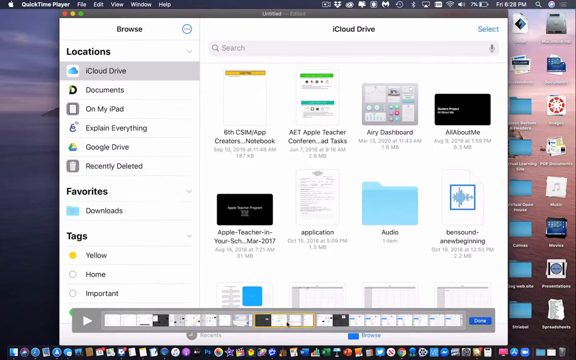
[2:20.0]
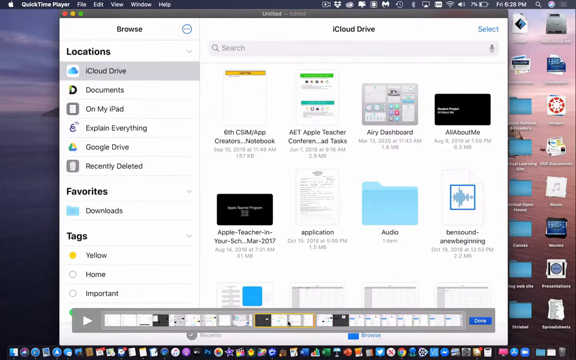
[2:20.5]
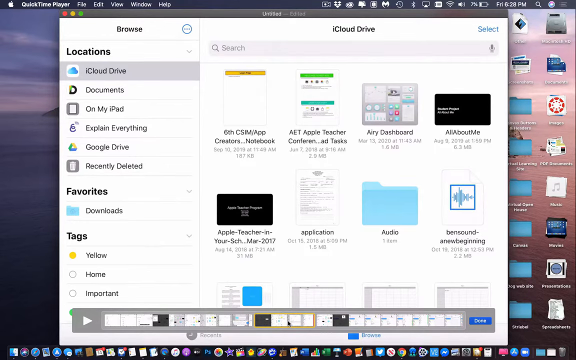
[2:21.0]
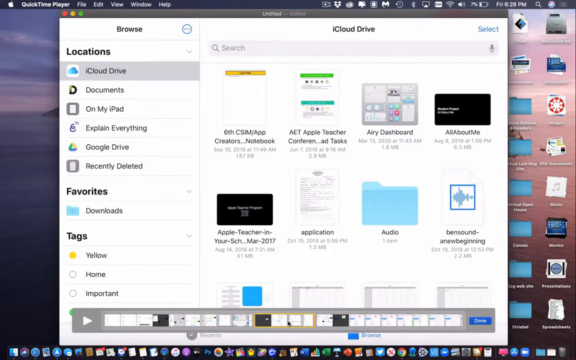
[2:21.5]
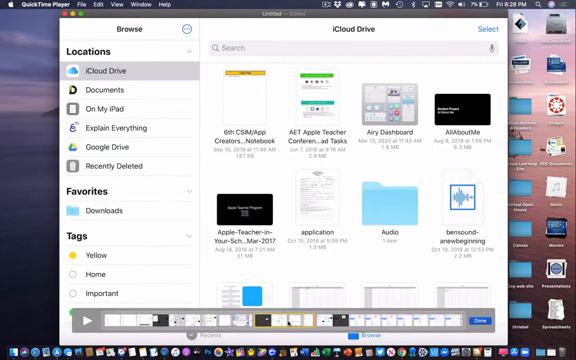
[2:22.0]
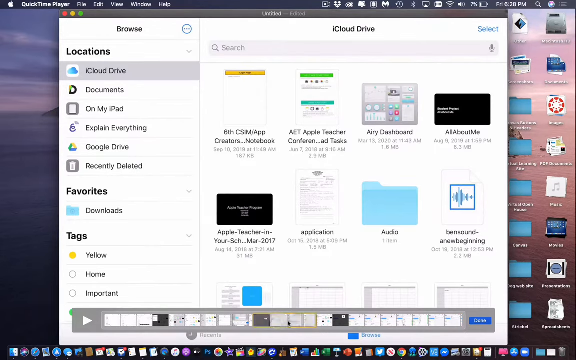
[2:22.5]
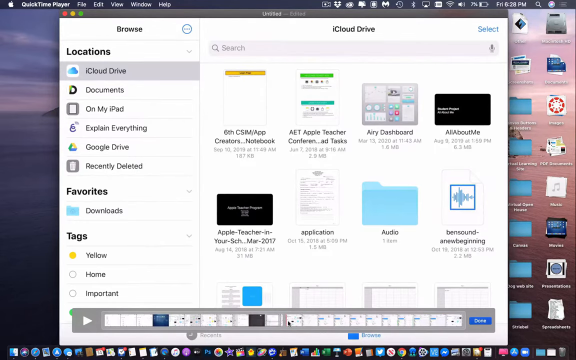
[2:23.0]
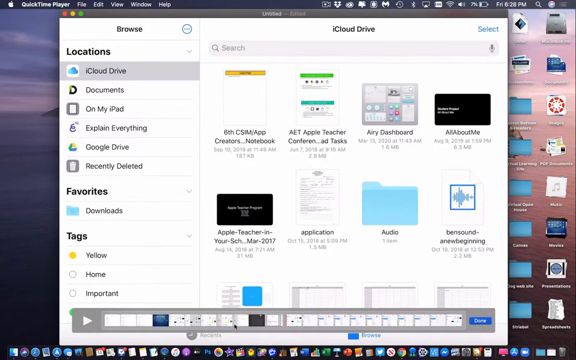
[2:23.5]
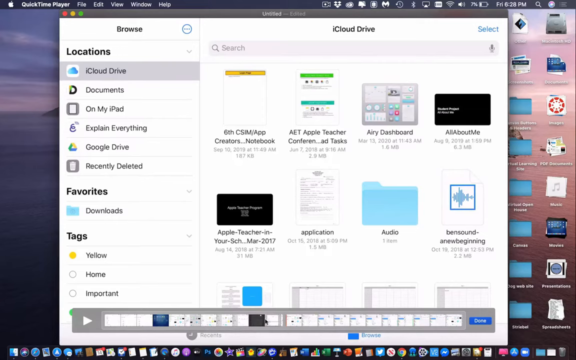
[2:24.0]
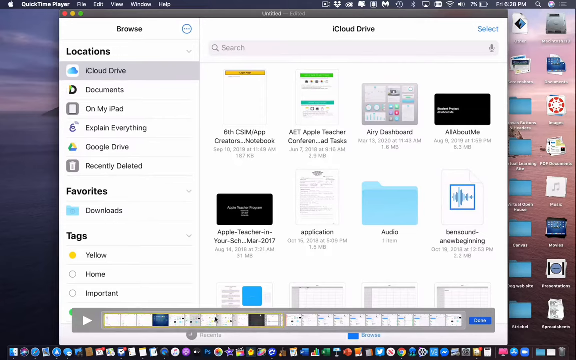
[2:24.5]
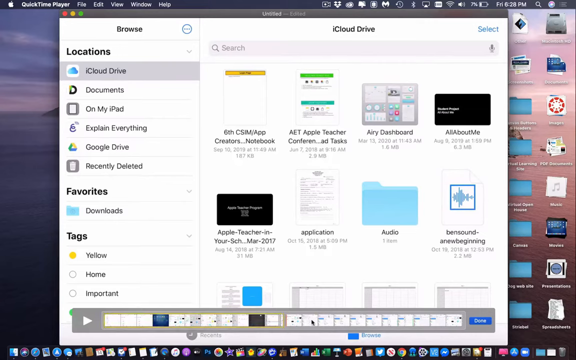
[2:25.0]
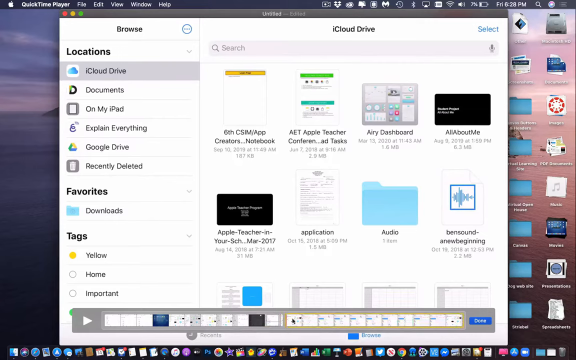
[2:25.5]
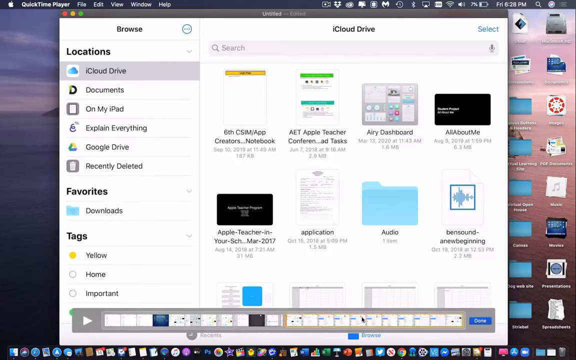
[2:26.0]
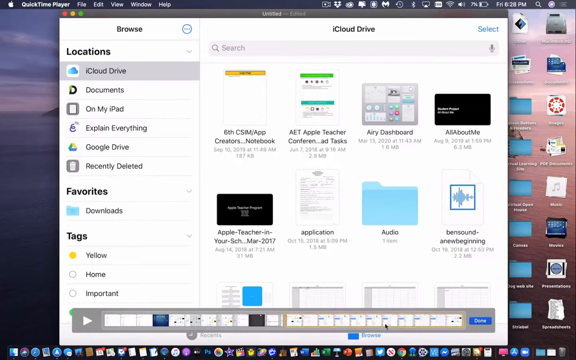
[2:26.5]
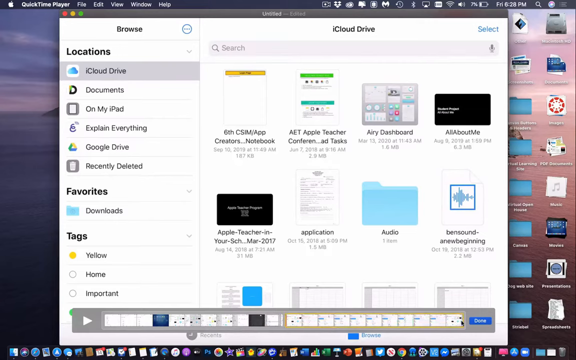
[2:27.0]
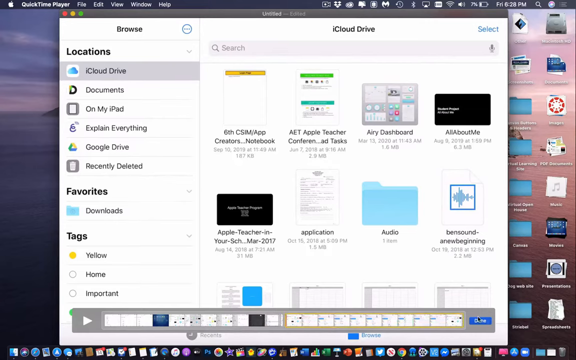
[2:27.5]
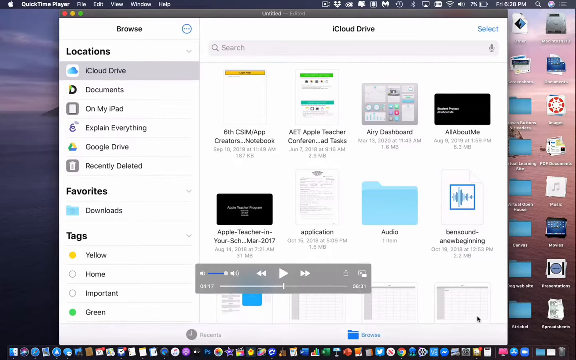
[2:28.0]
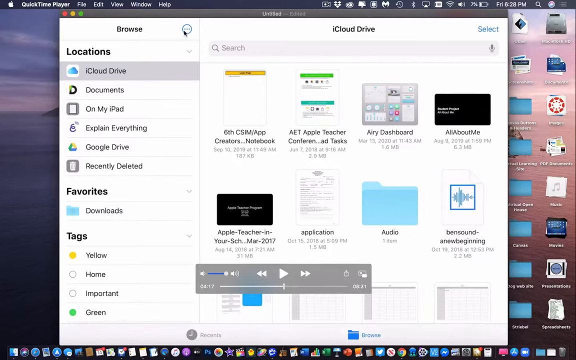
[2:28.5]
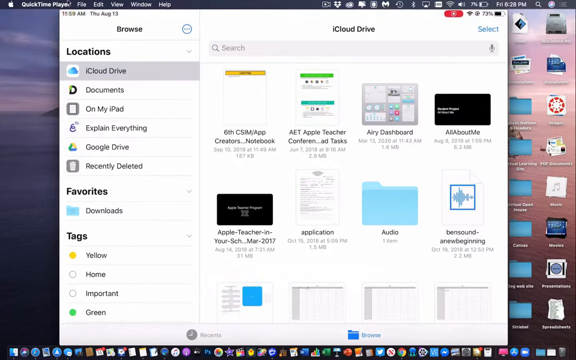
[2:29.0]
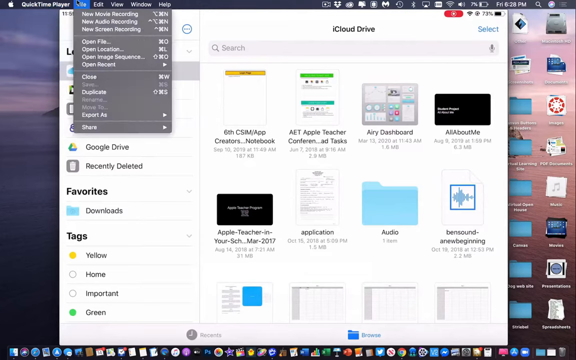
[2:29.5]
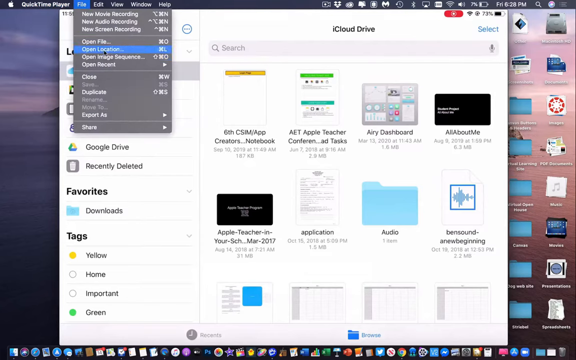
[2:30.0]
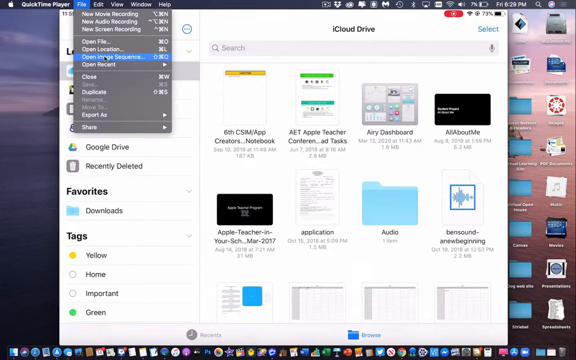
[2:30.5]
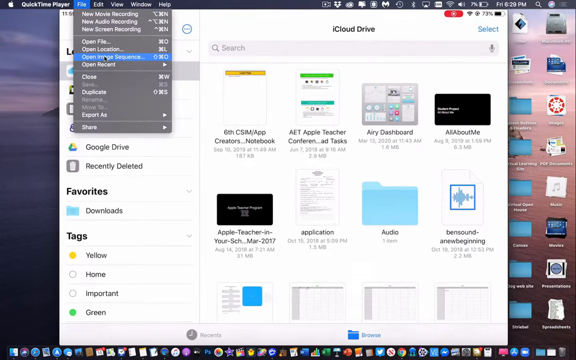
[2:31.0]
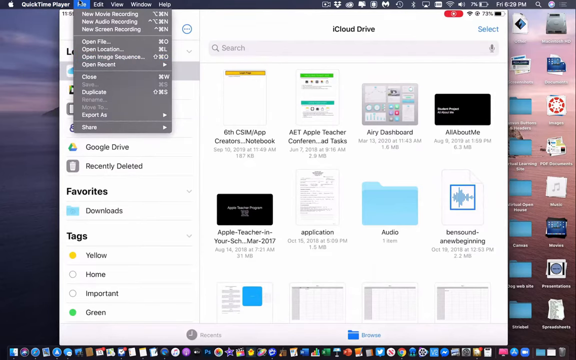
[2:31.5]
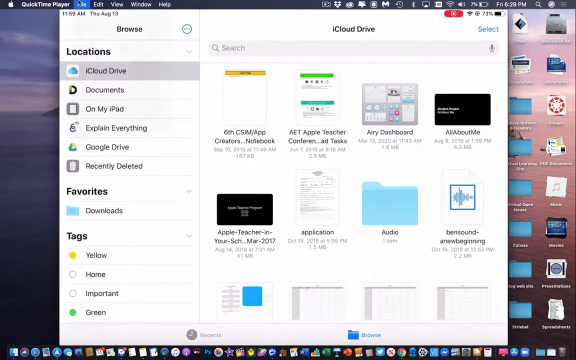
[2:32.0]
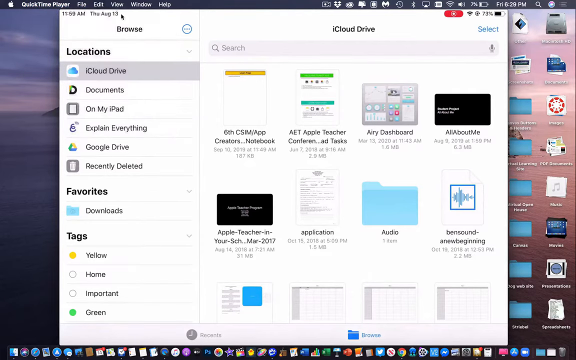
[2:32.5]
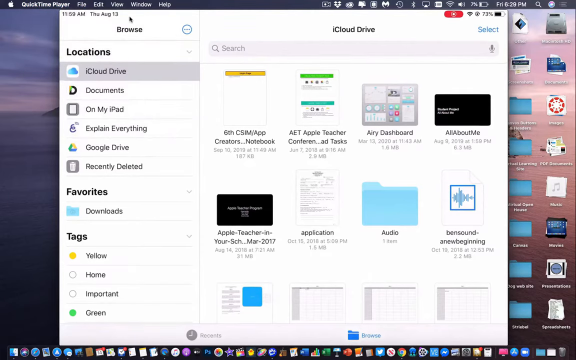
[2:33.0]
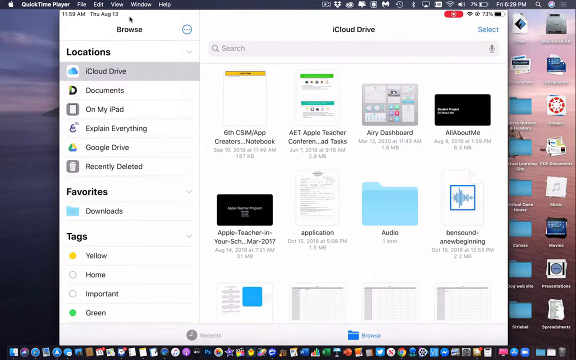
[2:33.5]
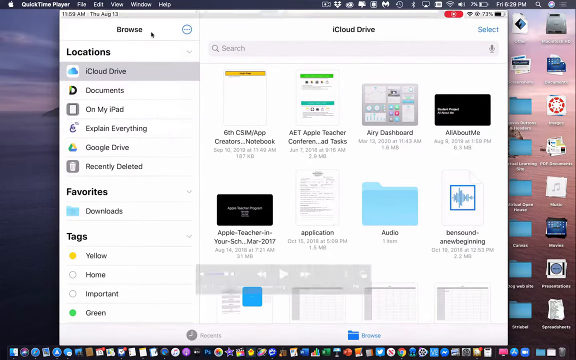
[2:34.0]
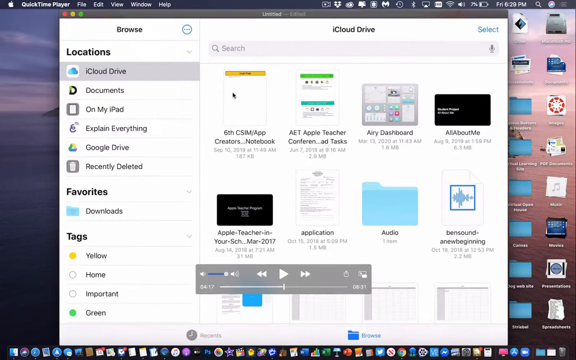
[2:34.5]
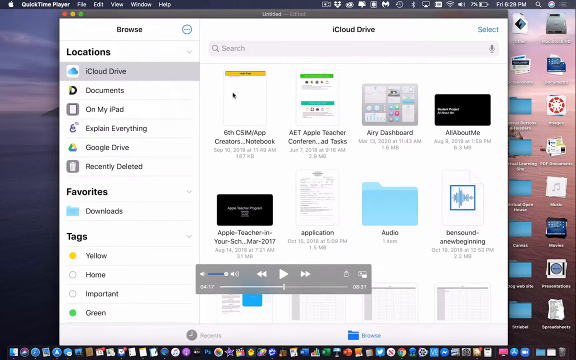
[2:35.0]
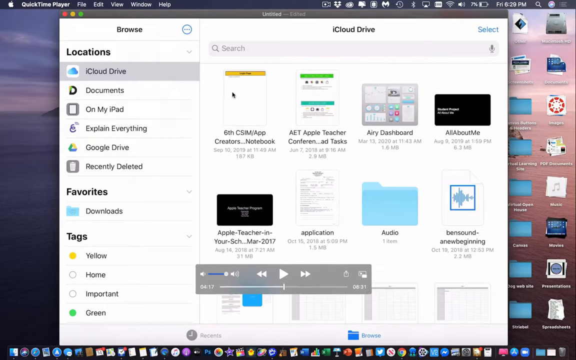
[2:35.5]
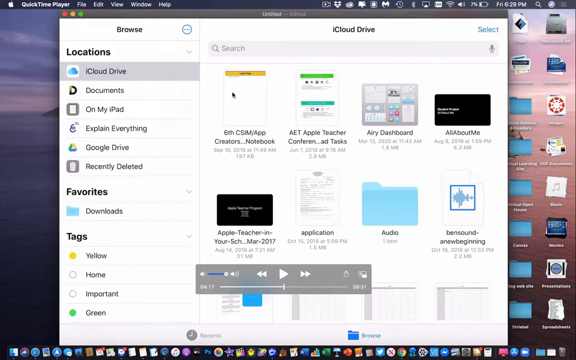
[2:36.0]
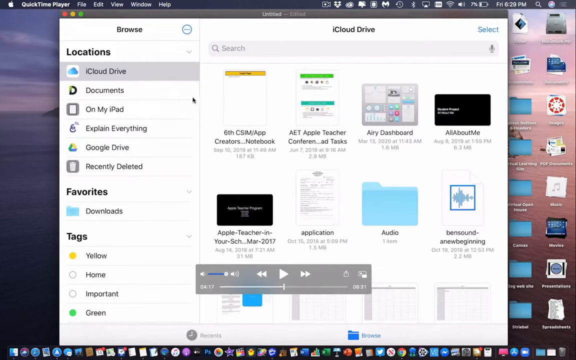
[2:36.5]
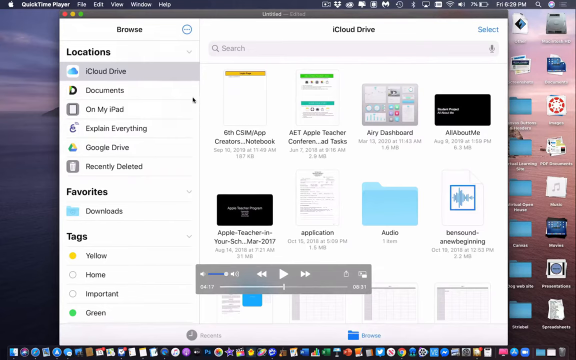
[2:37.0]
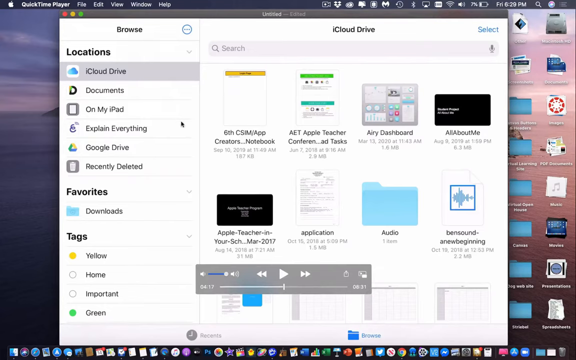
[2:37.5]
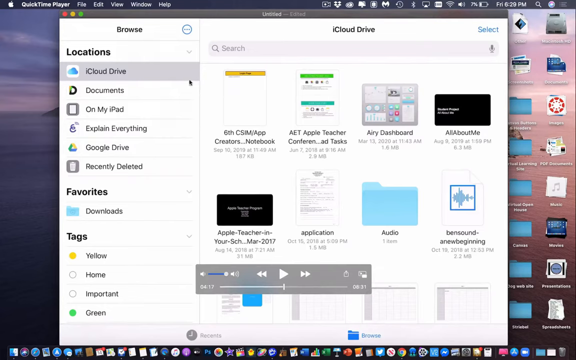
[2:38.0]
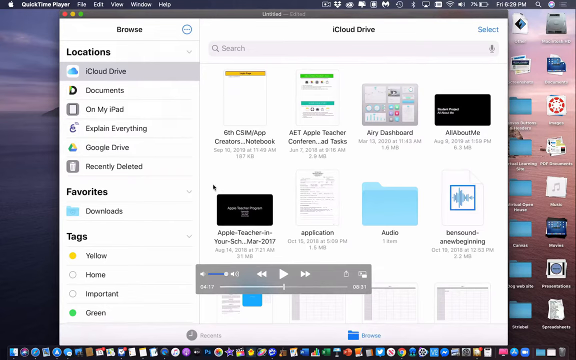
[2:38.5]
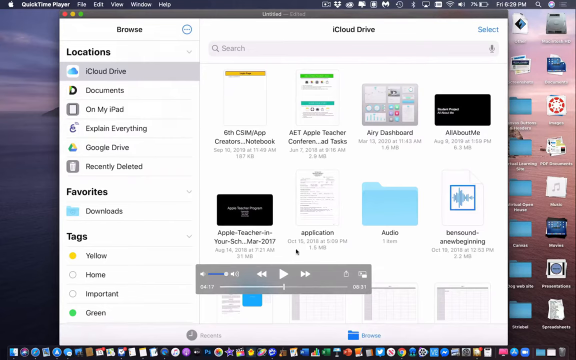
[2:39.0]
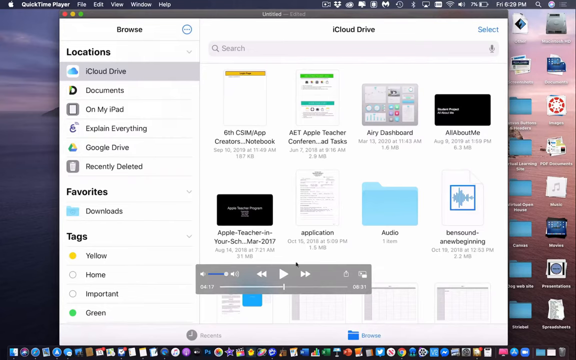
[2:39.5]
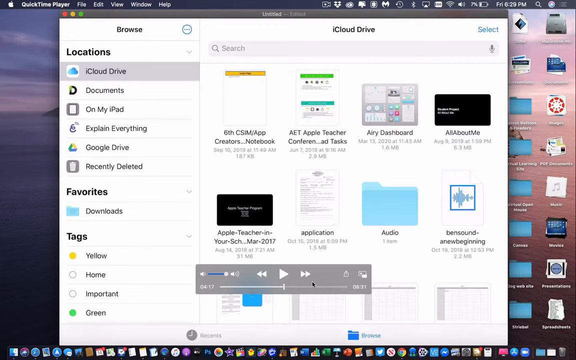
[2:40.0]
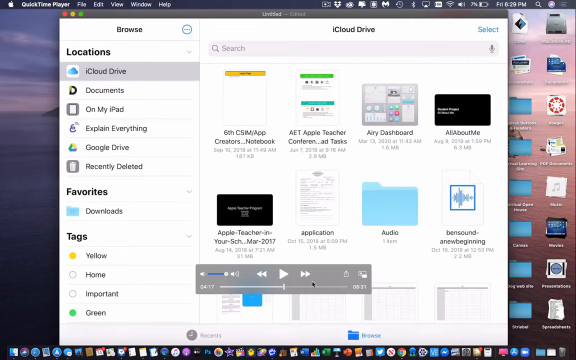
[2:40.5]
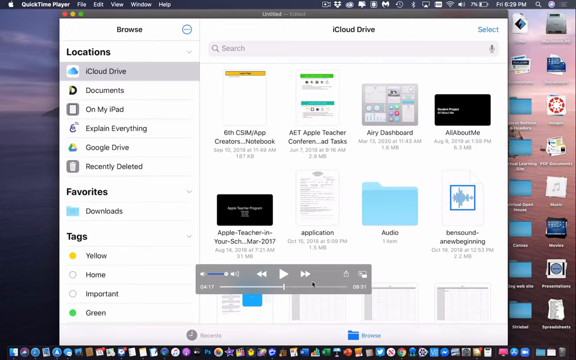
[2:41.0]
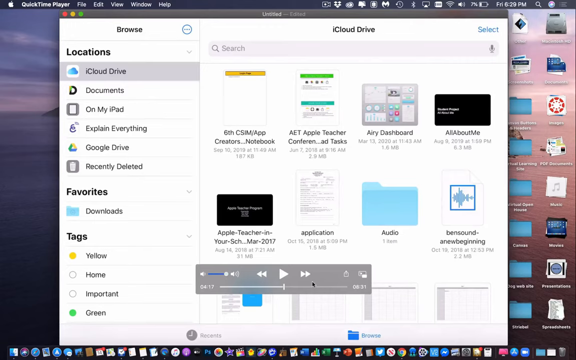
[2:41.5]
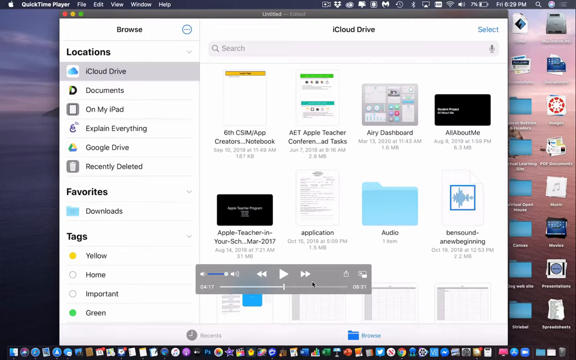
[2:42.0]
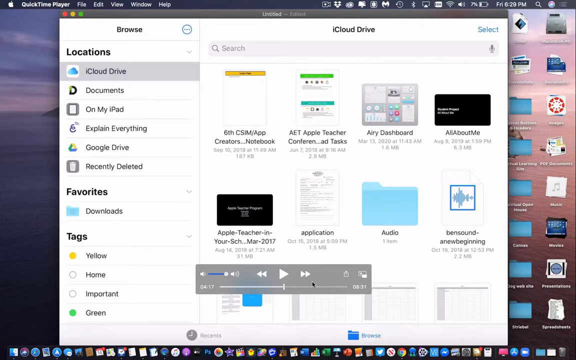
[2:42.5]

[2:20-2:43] A person is using an iPad to split a video clip in QuickTime Player. Many folders are visible, and menus are at the top. In the center of the screen a video is playing, titled "untitled." At the bottom center is a play bar containing the entire video, in which the person can choose different sections of the video and how to split it. The mouse cursor hovers over a middle section of the video, which is highlighted; the person clicks on it and it disappears. The cursor moves to the left and then to the right, and the person clicks on the Done button over on the right side. They then move the cursor up to File and "Open Image Sequence," then back up to File, and hover over the Browse button. The cursor moves over to a file called "6th CSIM app" on the video that is playing, then moves around kind of randomly, and finally moves over to where the play bar is.